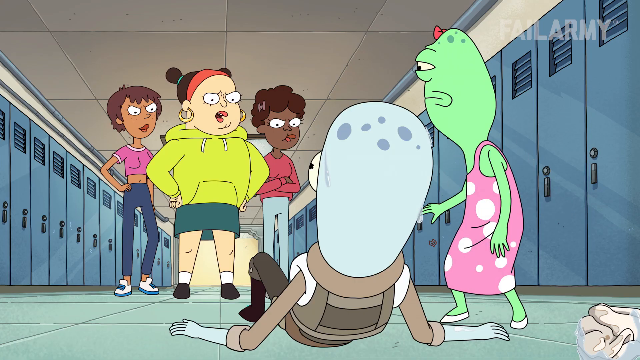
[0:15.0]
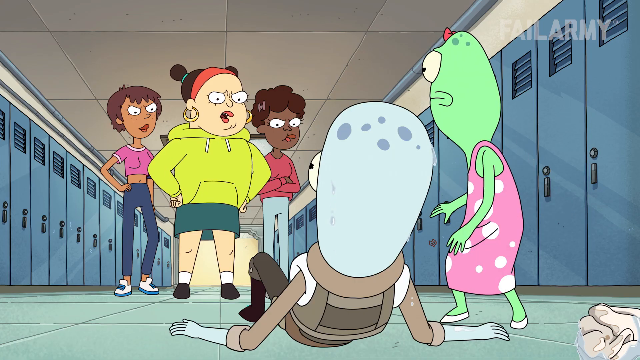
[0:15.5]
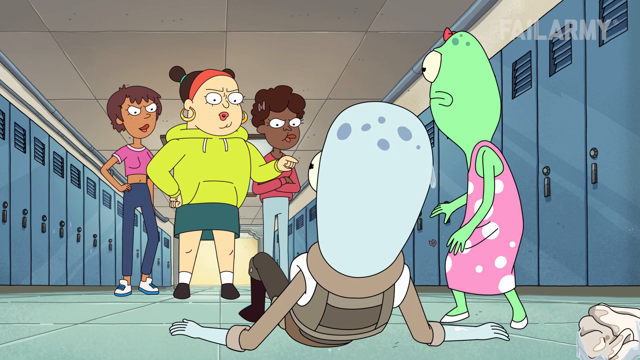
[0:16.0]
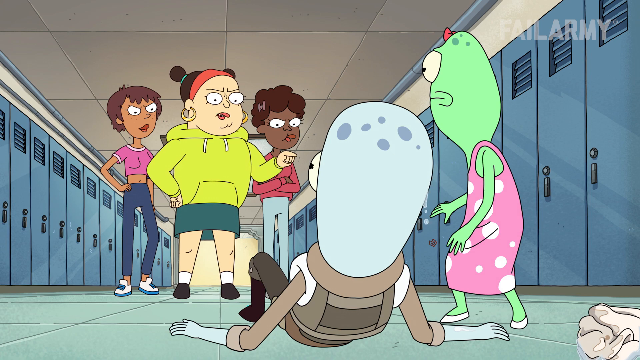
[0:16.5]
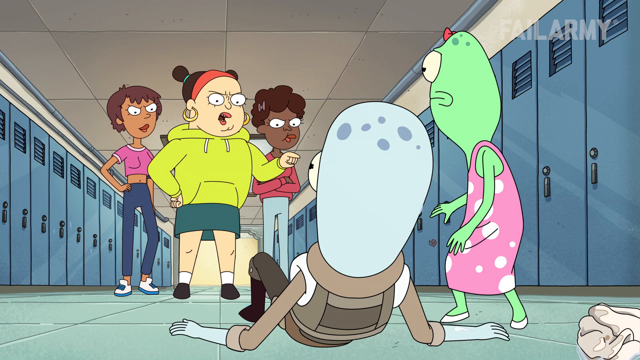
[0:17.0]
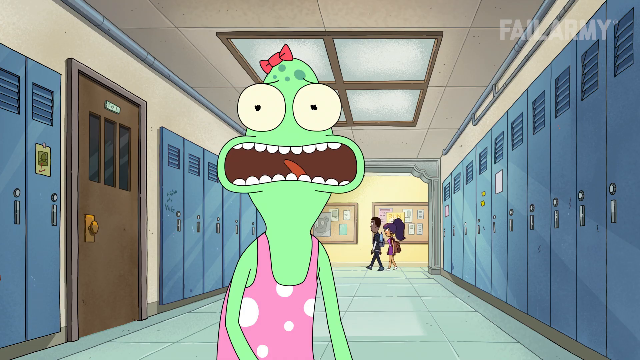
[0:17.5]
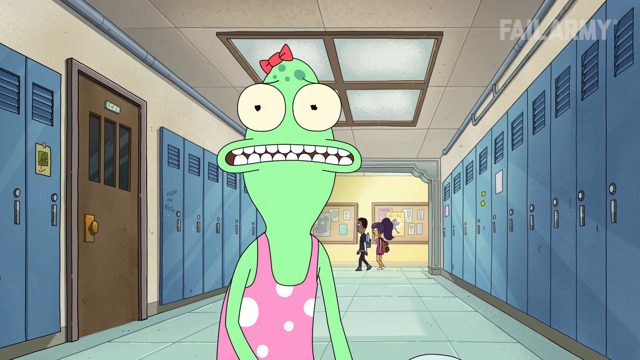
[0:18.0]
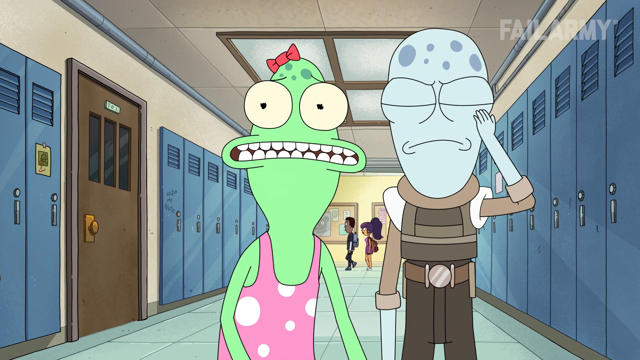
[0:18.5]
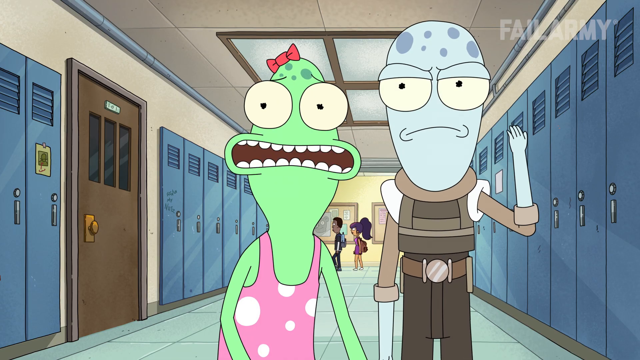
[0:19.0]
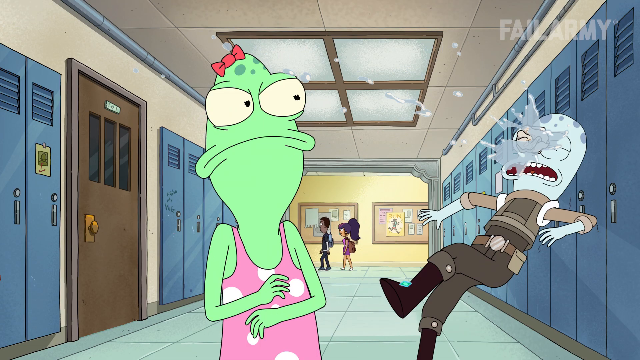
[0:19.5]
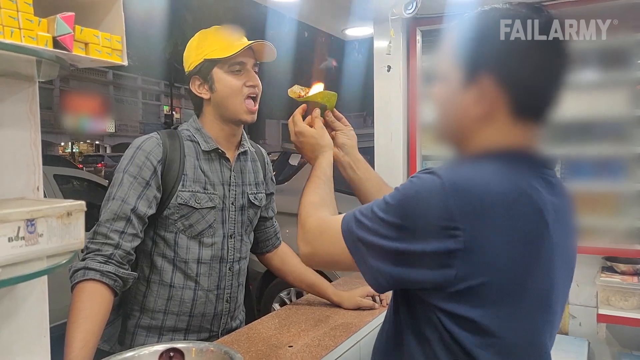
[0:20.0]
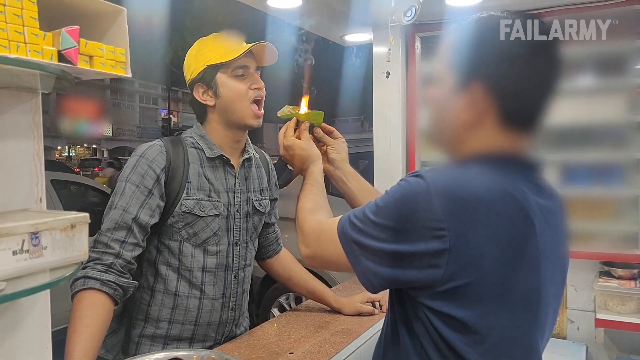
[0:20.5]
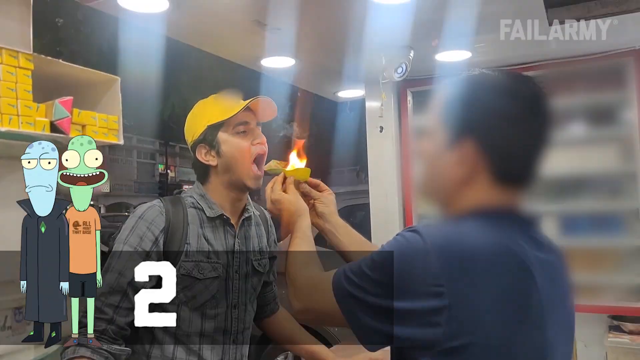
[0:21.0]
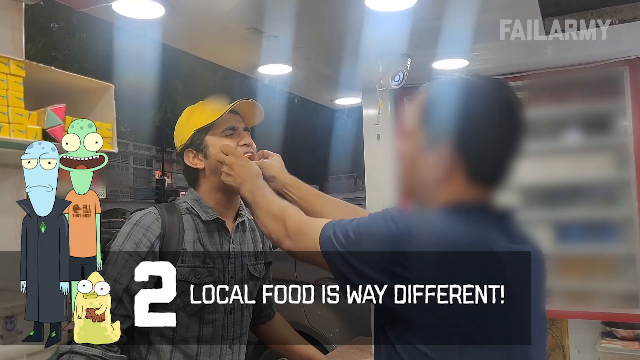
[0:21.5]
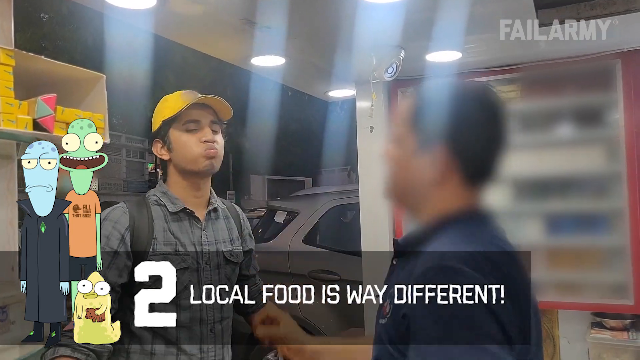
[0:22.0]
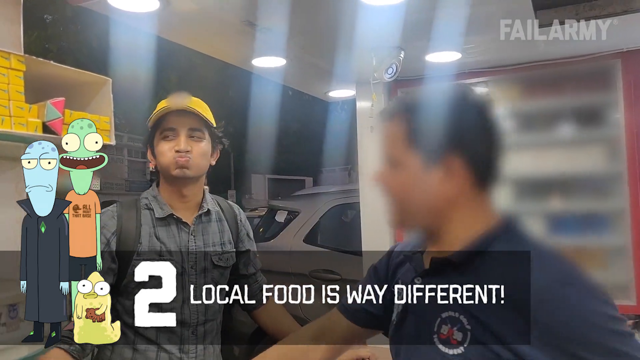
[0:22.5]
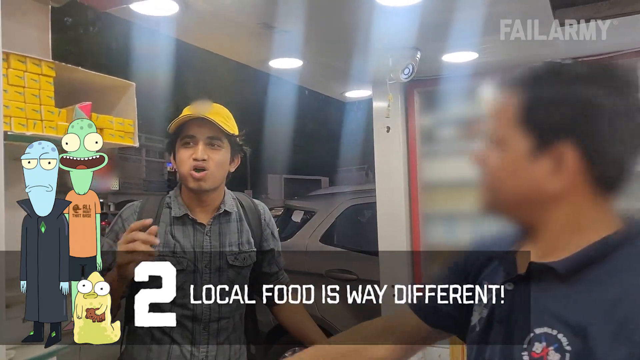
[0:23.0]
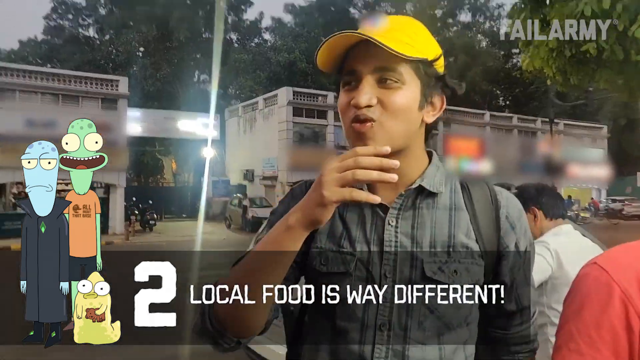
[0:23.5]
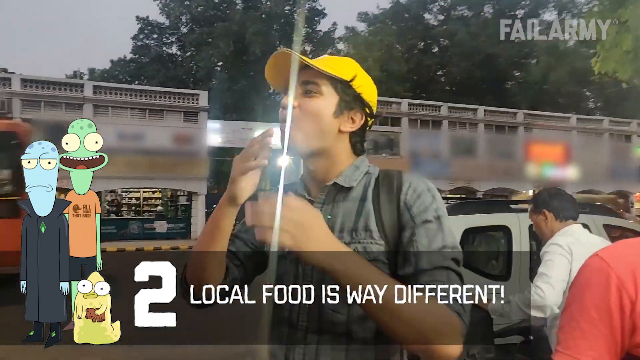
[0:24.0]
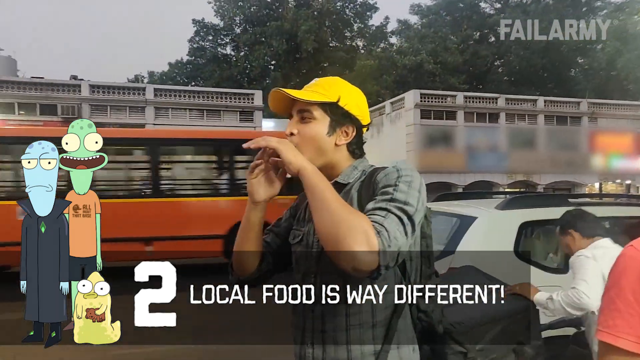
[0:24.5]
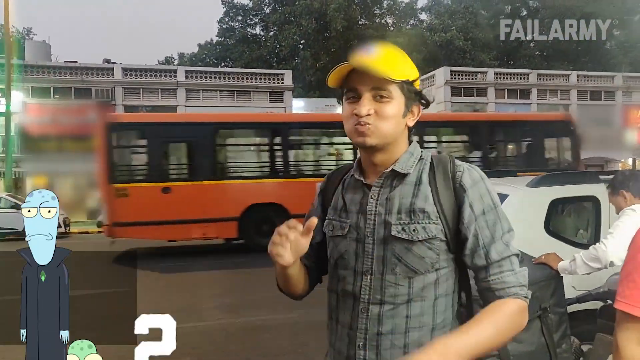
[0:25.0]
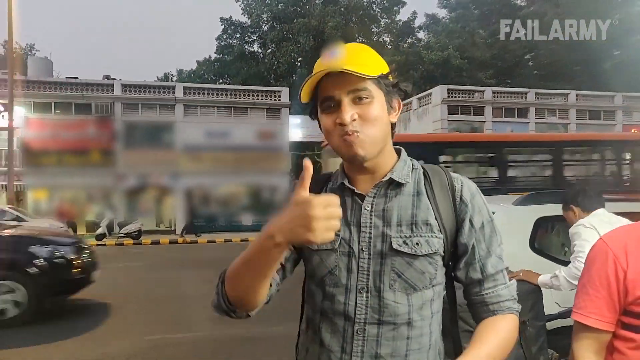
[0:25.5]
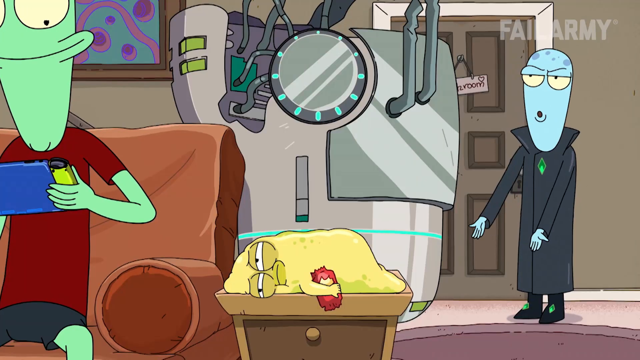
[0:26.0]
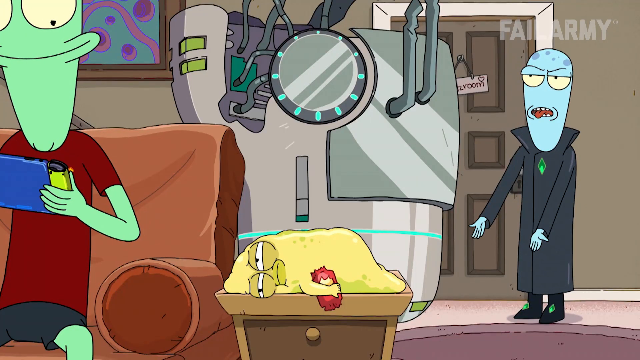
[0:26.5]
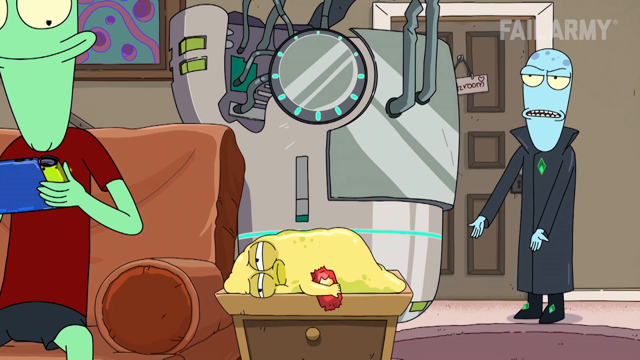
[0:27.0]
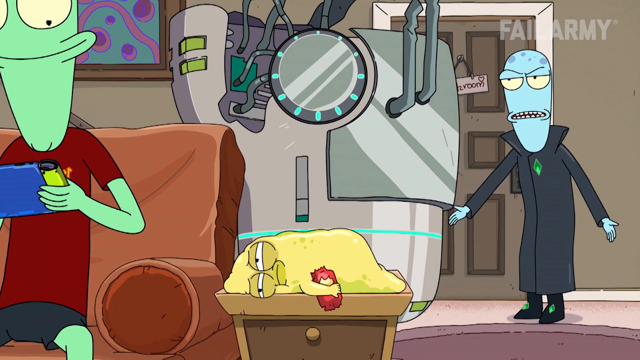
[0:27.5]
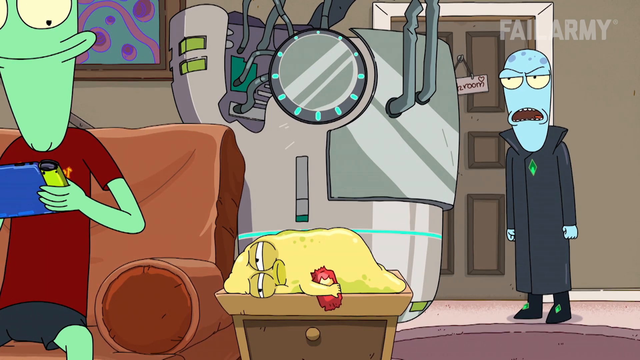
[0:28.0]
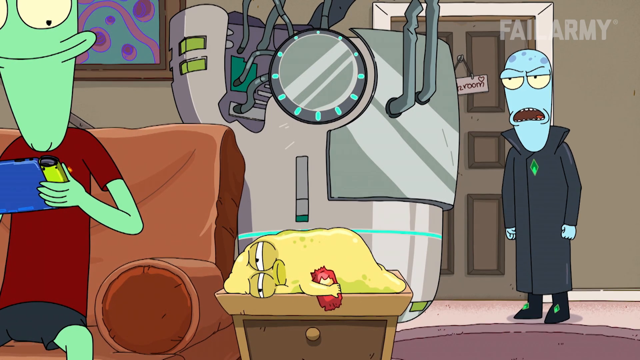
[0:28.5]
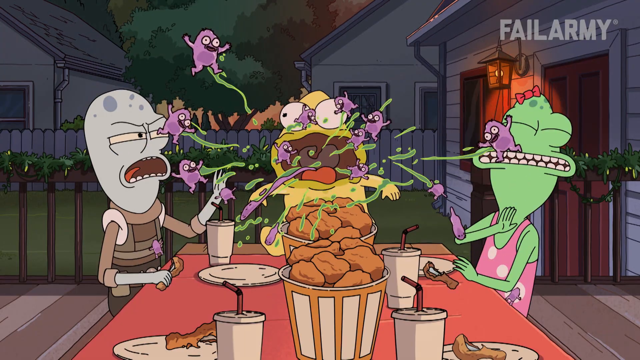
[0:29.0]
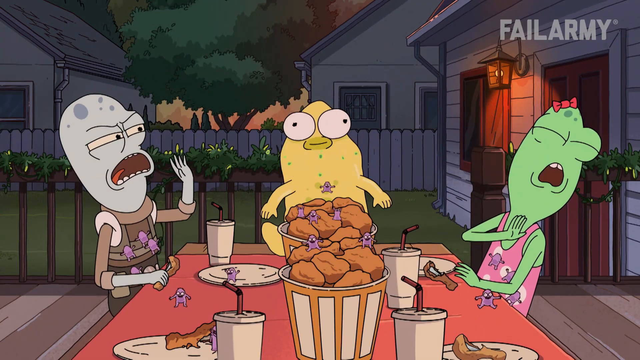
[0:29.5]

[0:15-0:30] The cartoon characters appear to be in some kind of cartoon high school, confronted by other cartoon characters who are apparently not happy that they are there. The character who had something thrown at him is knocked to the ground, and one of the other characters stands over him; there are five characters in the scene. The knocked-down character has a friend, apparently a female of the same cartoon species, who is saying something, probably complaining. The video then cuts to videos of real people, probably high school students. Someone lights something on fire, possibly a flaming taco, and sticks it in a guy's mouth. Text reads "Local food is way different." Another scene shows cartoon characters apparently at home, possibly sitting down at a dinner table to eat.